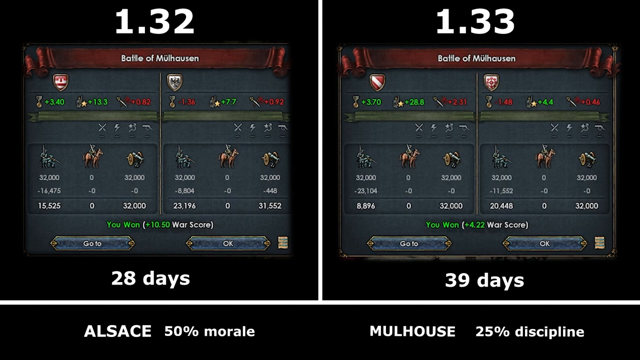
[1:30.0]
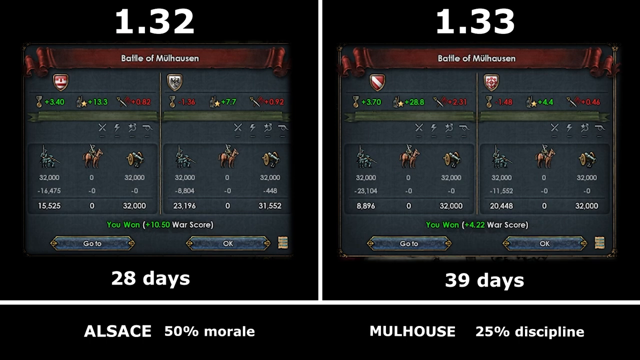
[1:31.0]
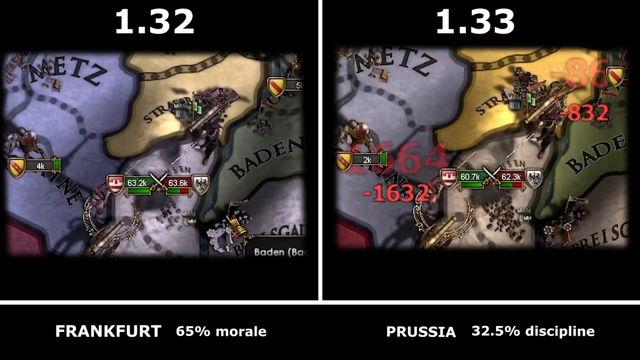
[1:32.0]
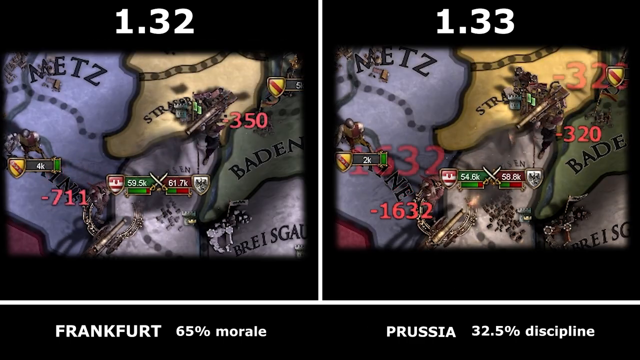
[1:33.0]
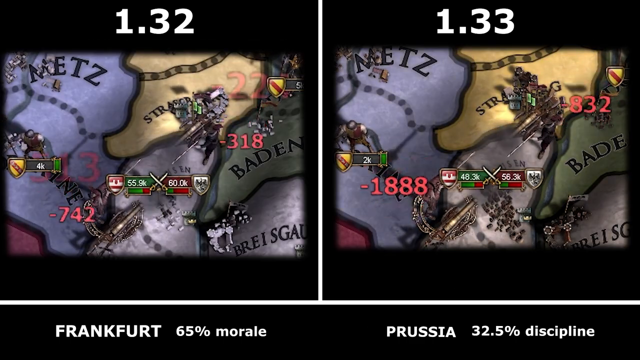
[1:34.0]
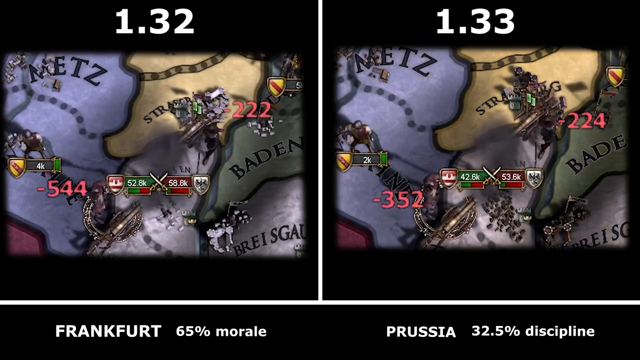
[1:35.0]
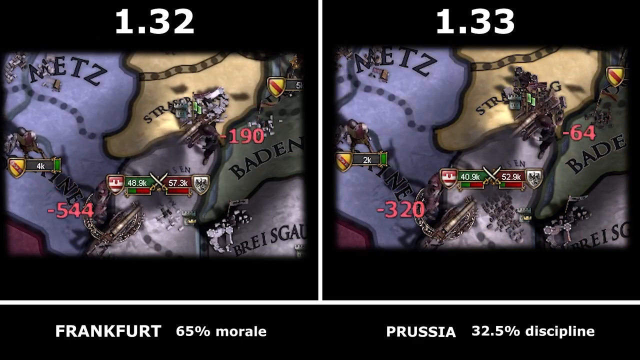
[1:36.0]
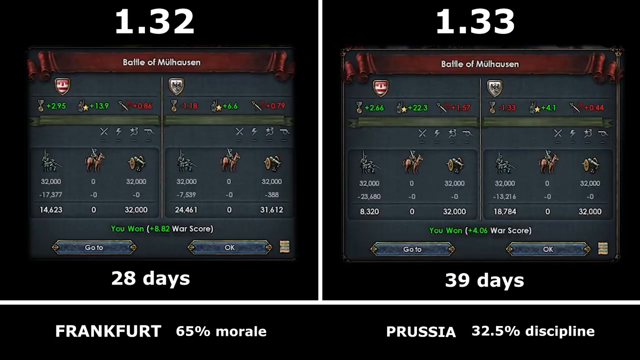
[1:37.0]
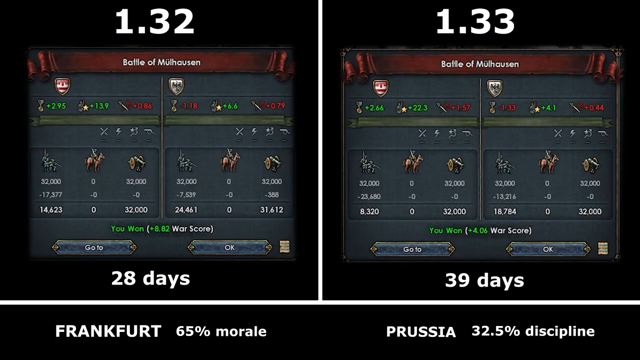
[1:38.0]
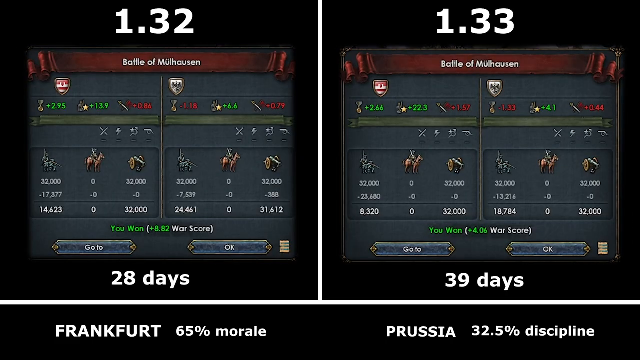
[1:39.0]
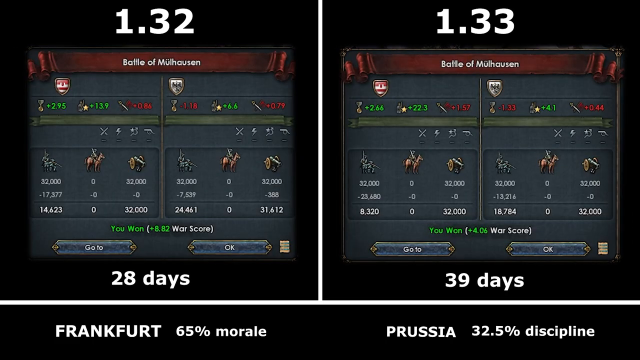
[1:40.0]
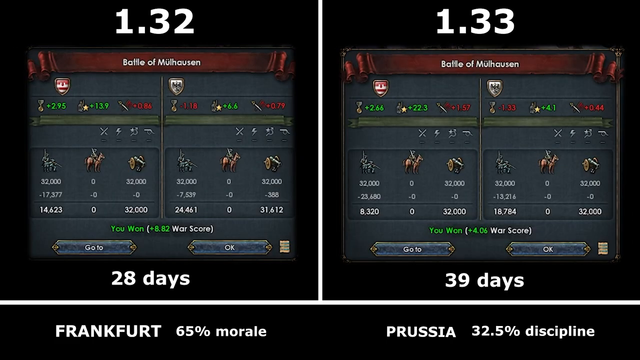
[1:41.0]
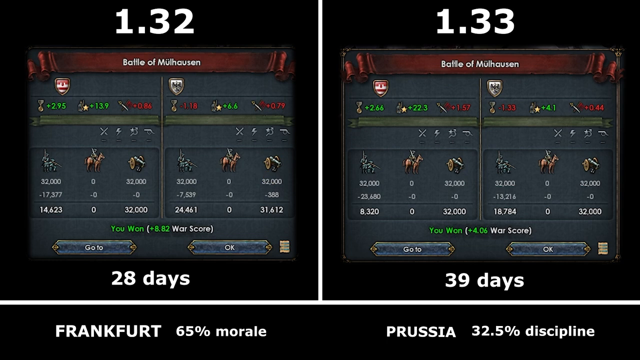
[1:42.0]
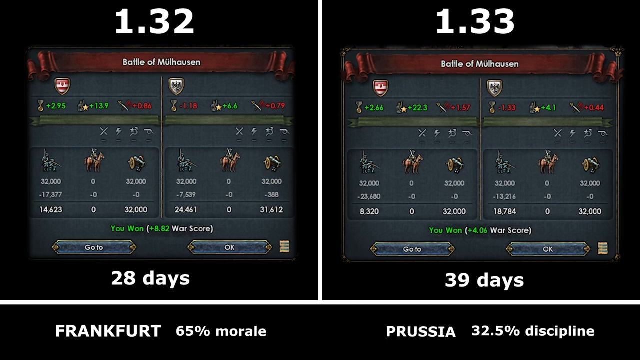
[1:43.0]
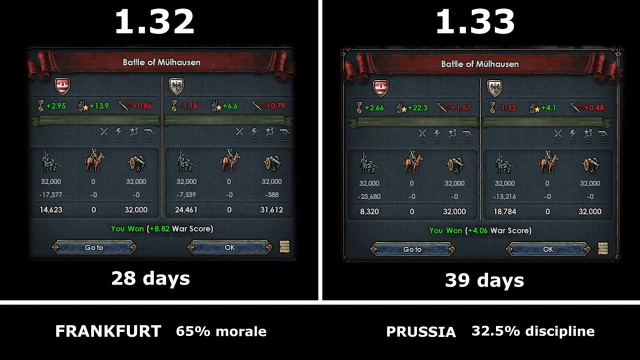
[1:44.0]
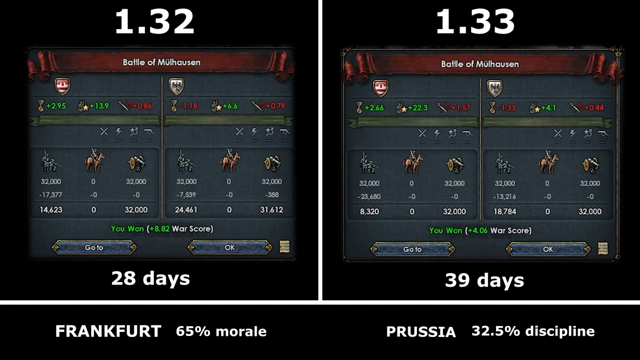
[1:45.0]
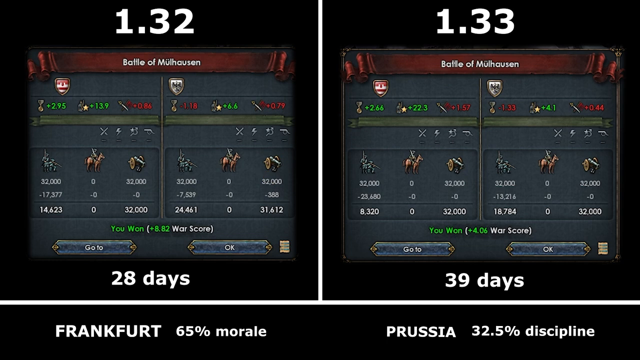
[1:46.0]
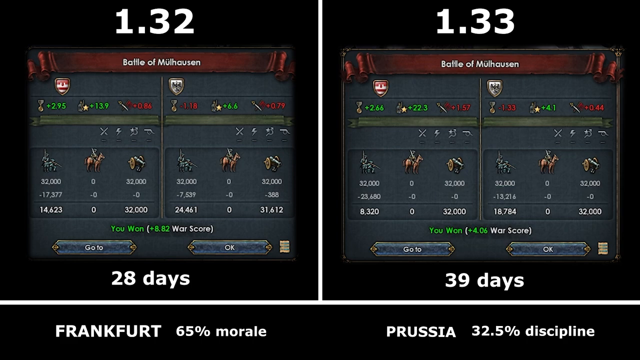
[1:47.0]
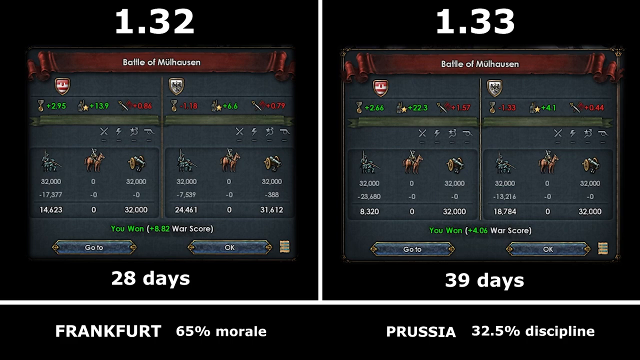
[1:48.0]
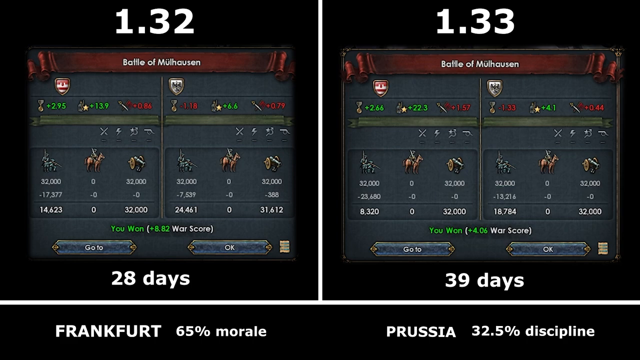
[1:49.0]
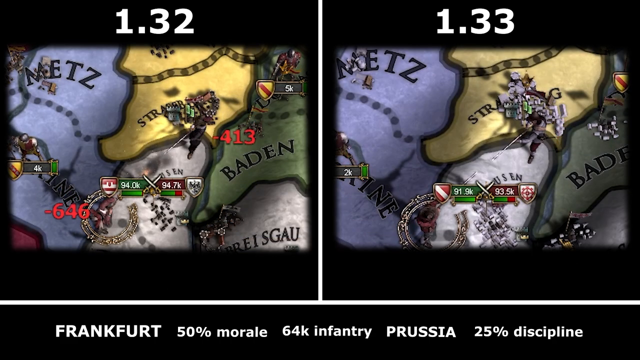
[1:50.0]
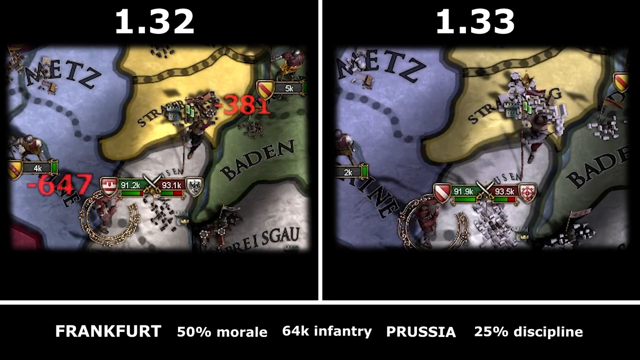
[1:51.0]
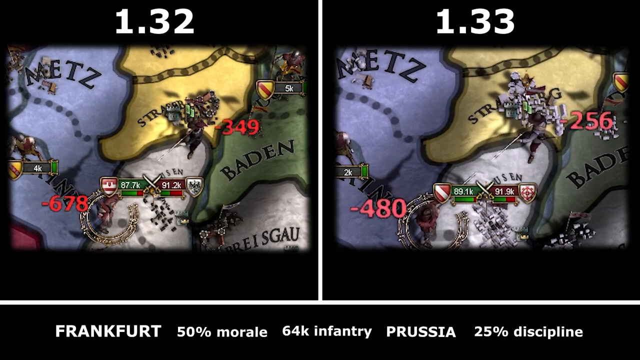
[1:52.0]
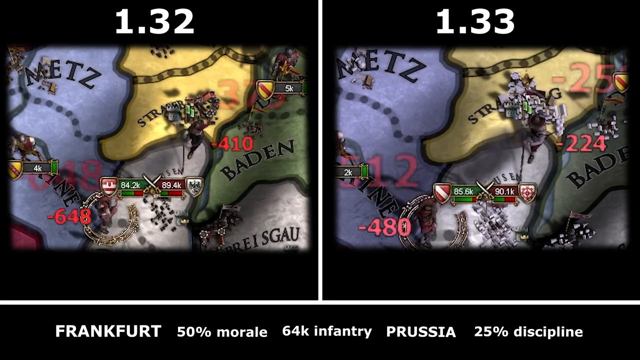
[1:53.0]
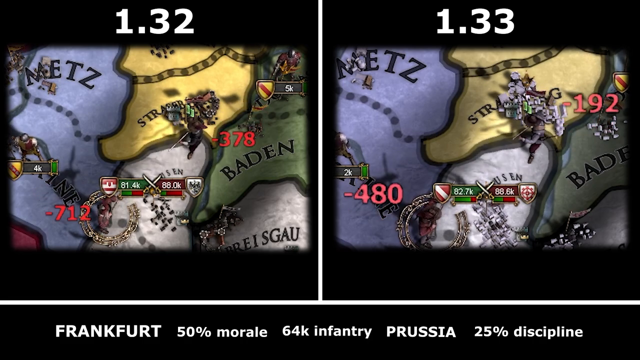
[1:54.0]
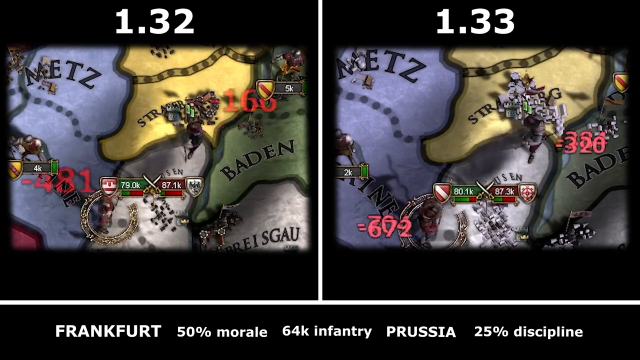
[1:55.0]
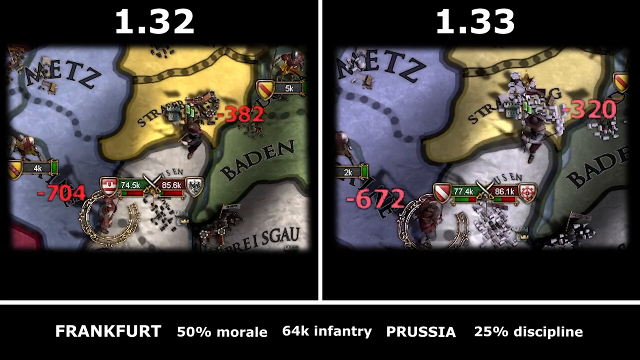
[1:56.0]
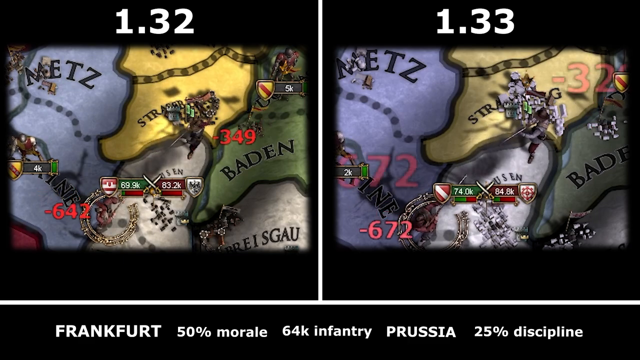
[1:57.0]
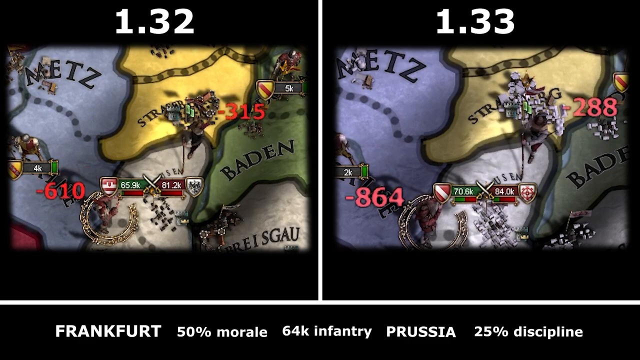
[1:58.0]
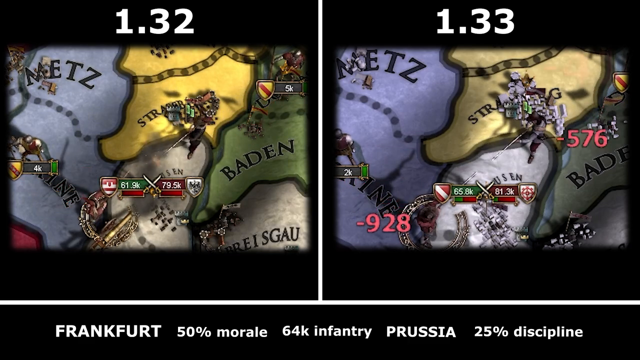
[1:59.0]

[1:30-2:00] The map returns, but the locations at the bottom of the screen have changed: on the left, "Frankfurt" with 65% morale, and on the right, "Prussia" with 32.5% discipline. The stat screen shows 28 days on the left and 39 days on the right. Back in the fighting scene, "64k infantry" appears between Frankfurt and Prussia. The gameplay seems fairly simple: a few characters stand on a kind of basic map, holding either guns or a cannon and facing off against each other. For each hit, negative numbers pop up on the corresponding side.